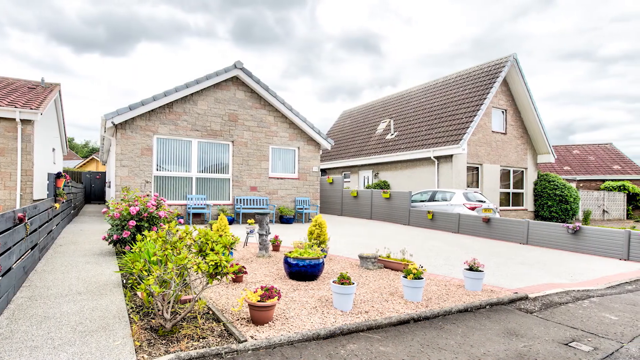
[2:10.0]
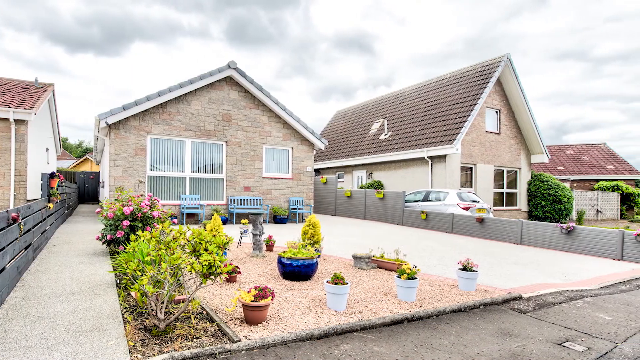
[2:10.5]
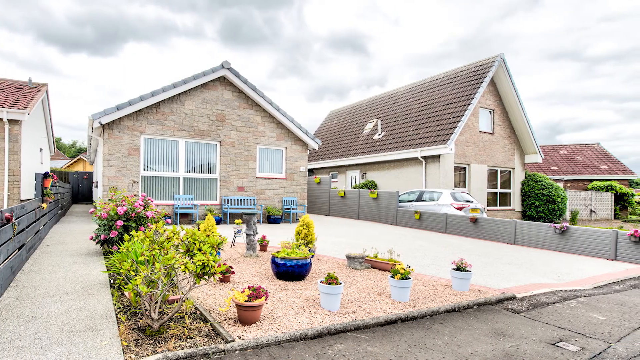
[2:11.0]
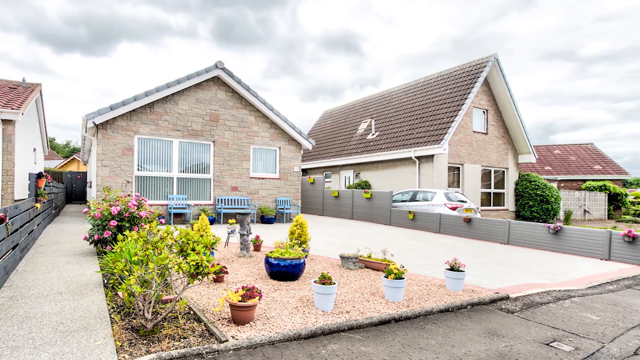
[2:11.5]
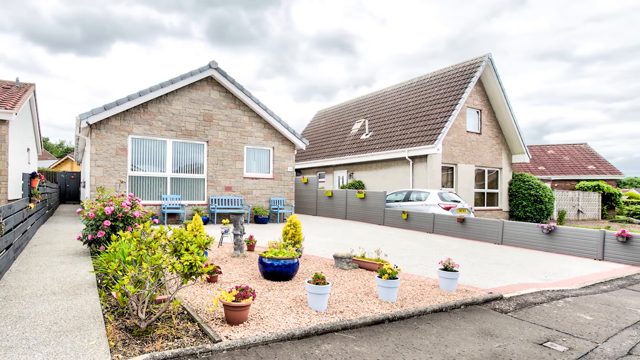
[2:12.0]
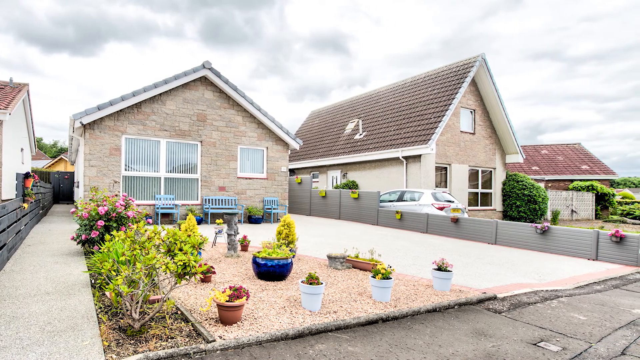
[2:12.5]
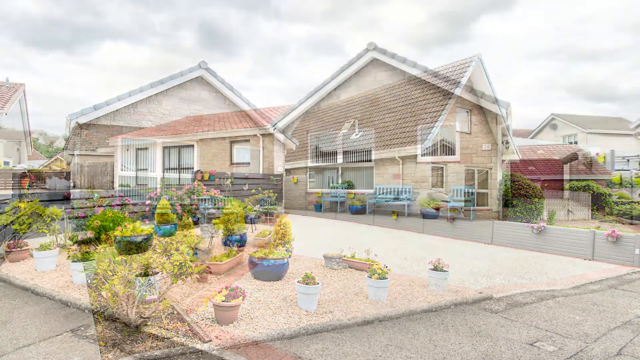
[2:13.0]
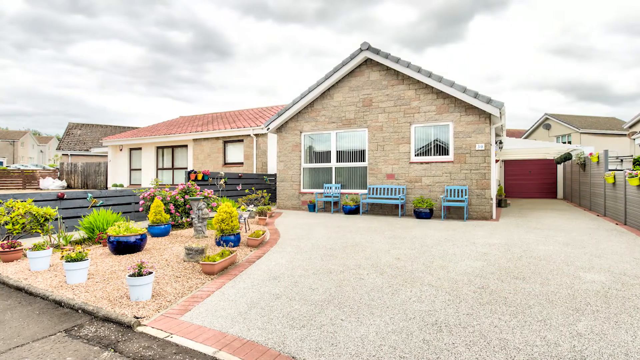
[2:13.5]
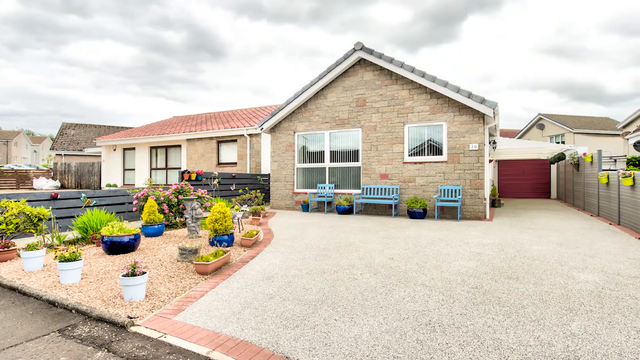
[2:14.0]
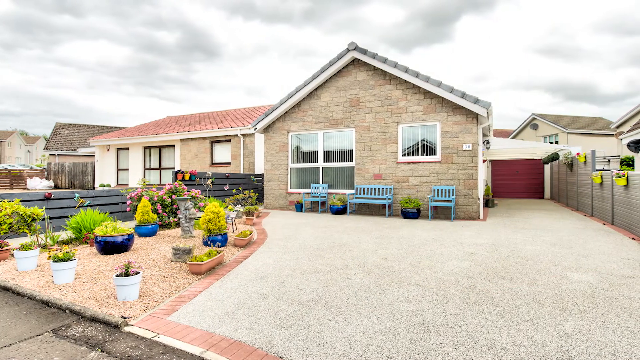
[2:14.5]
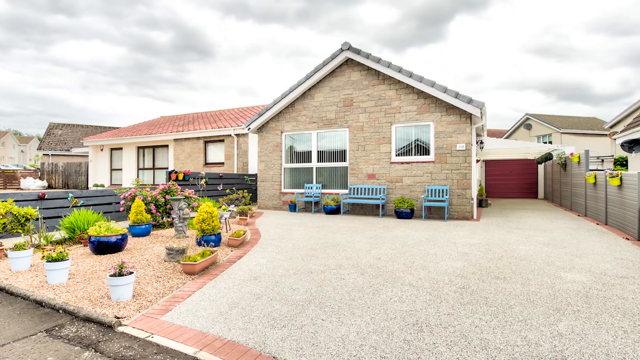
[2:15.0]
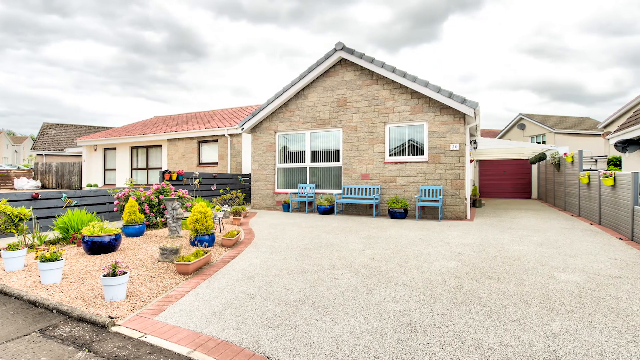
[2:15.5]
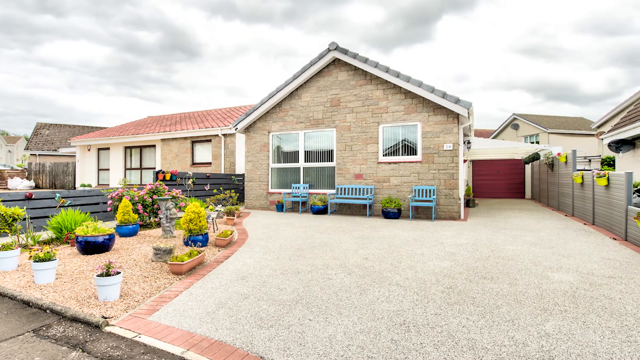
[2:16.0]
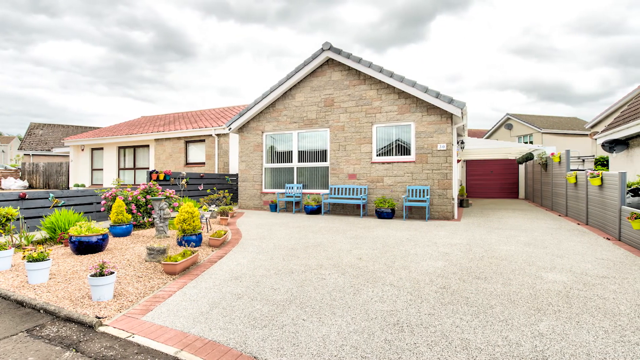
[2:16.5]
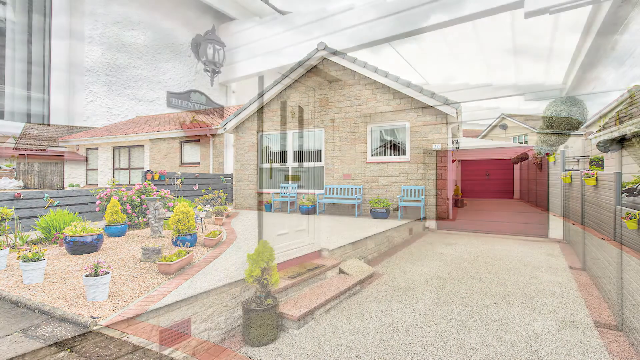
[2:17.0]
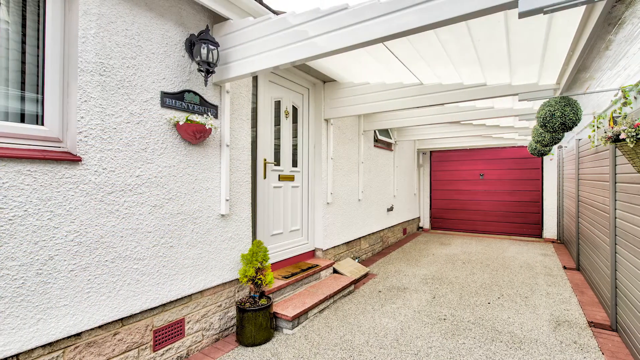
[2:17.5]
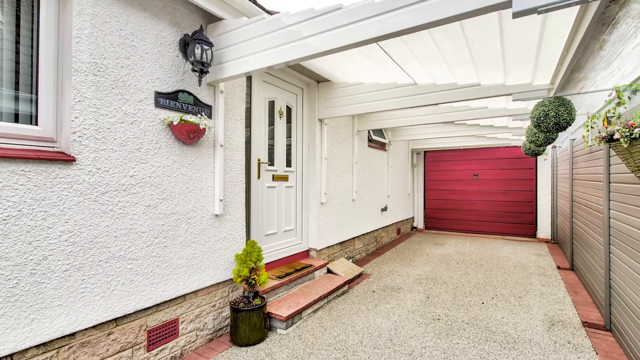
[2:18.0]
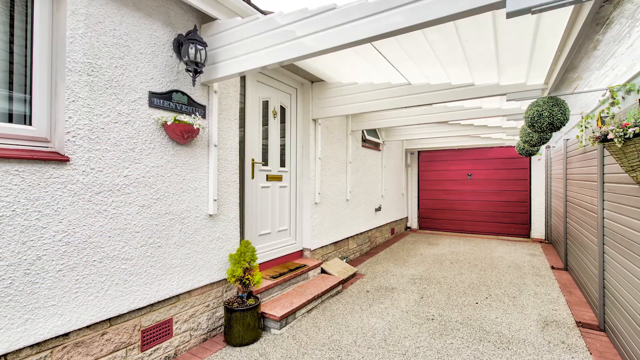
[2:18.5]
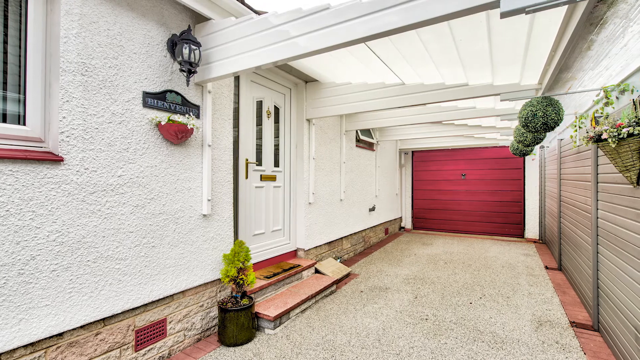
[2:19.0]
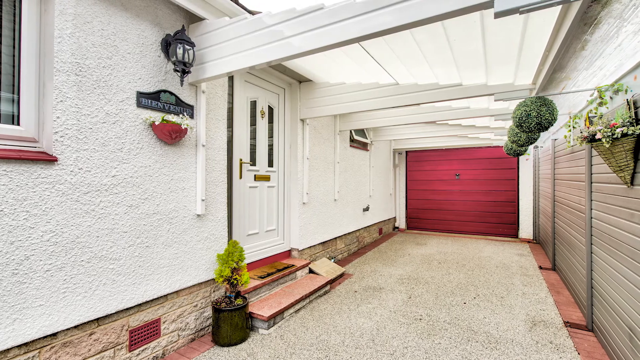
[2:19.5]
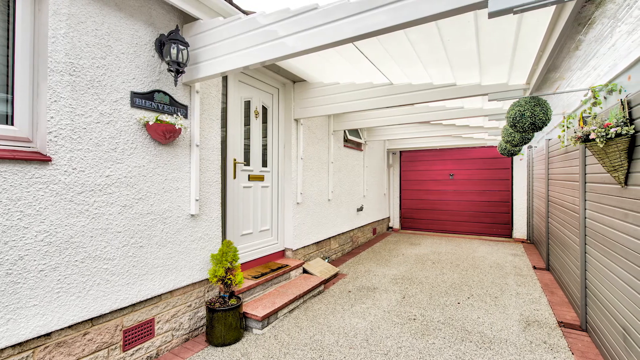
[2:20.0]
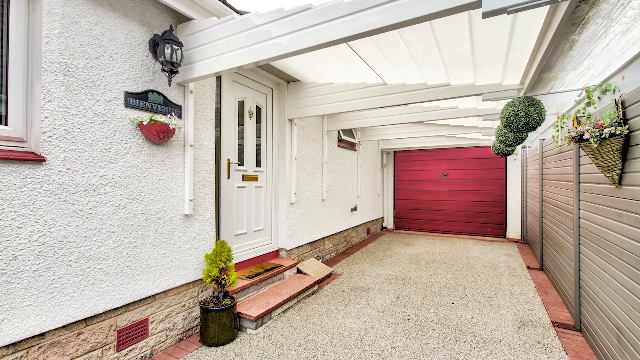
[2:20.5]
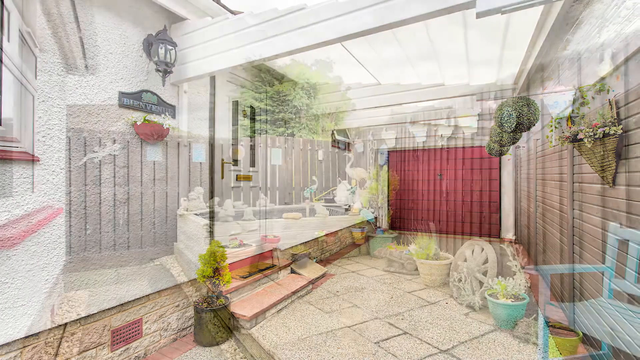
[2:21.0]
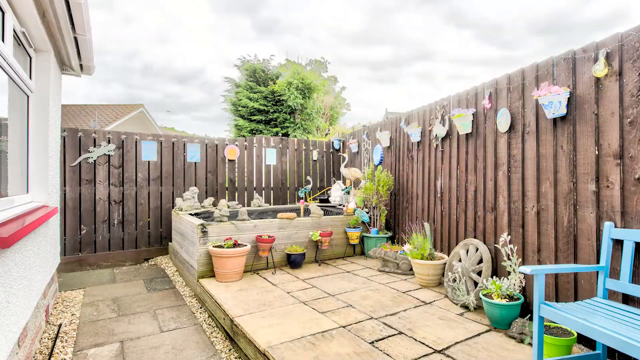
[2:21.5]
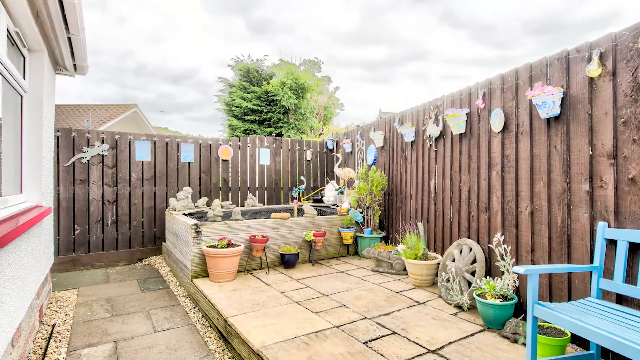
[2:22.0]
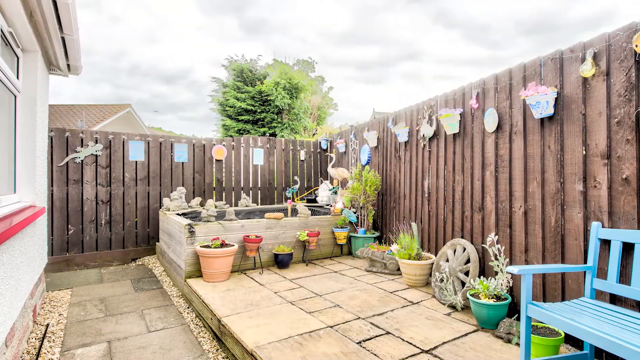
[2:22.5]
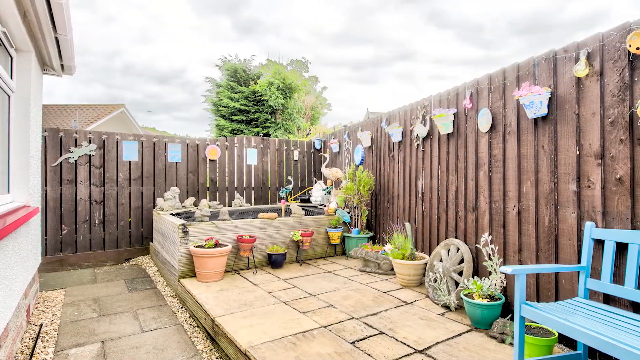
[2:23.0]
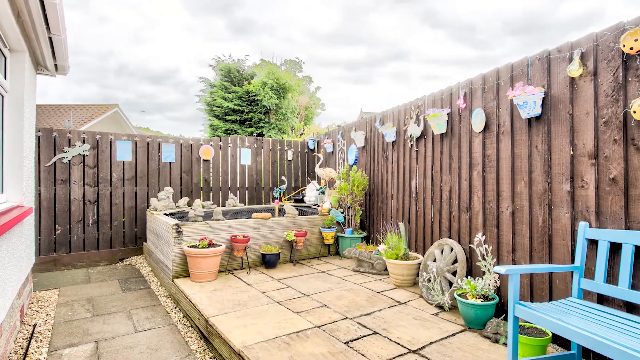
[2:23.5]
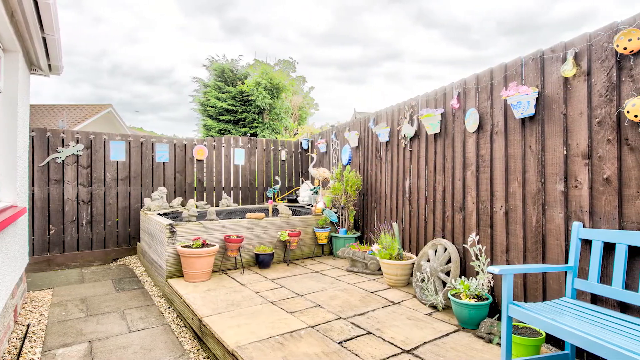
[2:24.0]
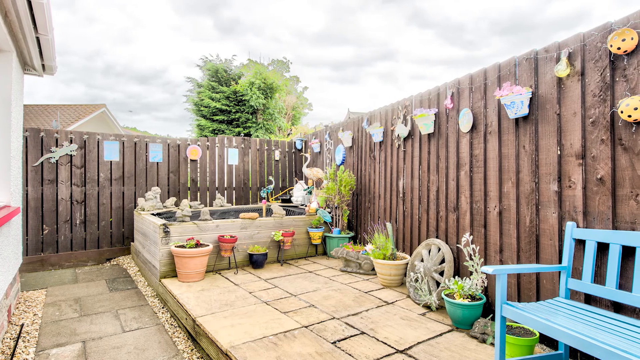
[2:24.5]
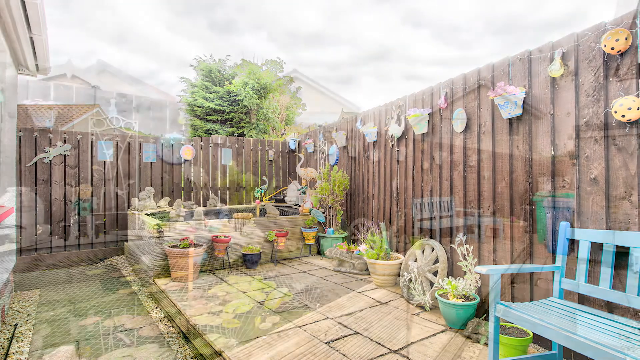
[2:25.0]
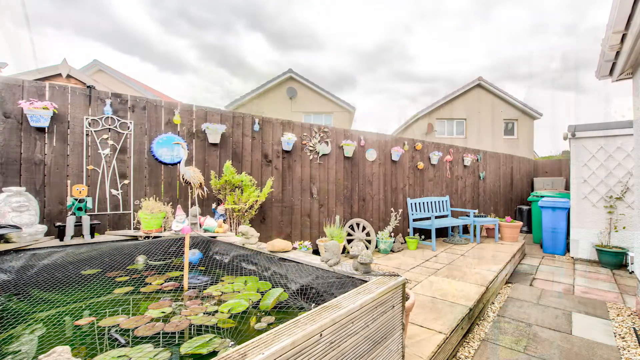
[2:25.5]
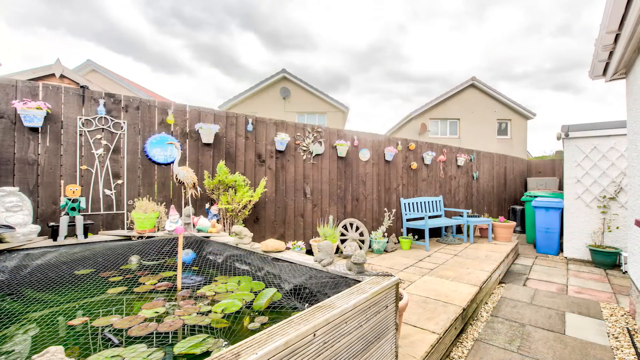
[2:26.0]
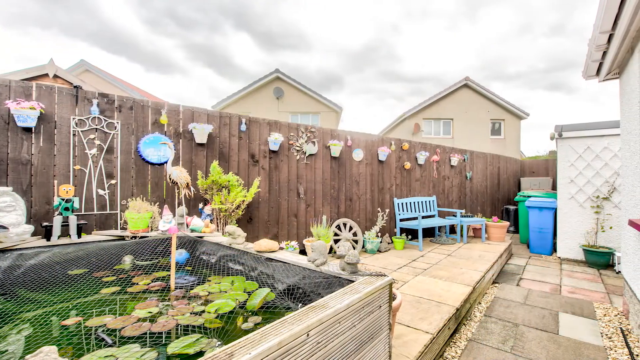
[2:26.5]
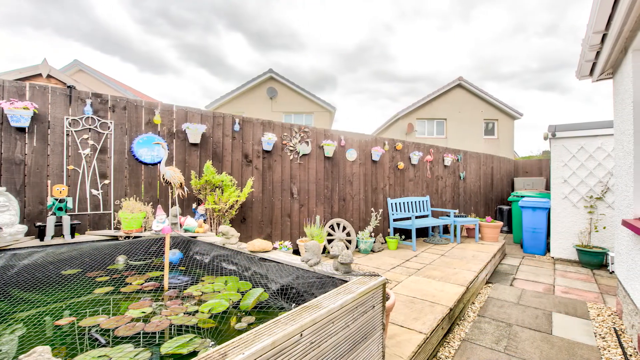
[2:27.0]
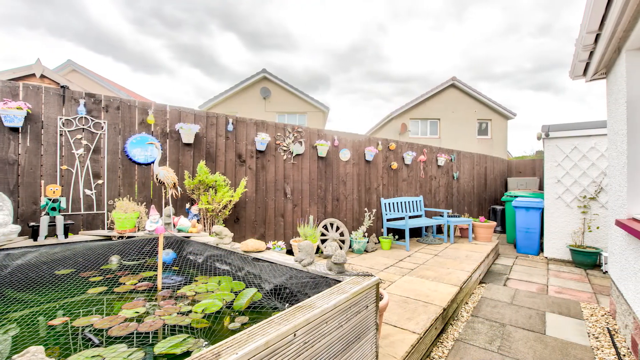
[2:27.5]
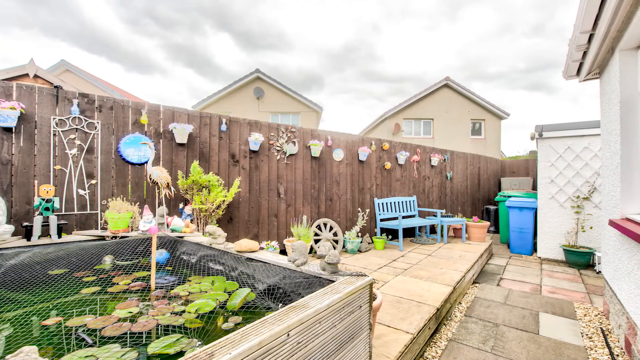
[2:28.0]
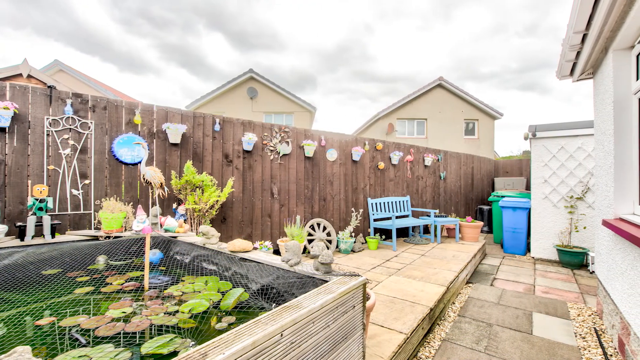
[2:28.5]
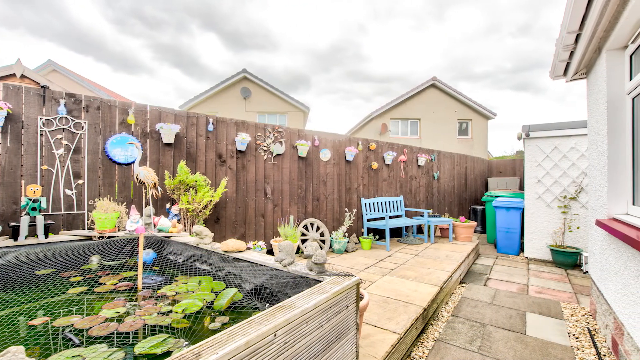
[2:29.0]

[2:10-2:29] The front view of the property is shown one more time. The front of the house has a kind of ashlar, stone cladding, with one big set of windows and one small square window. There is a narrow path on the left-hand side, a gravelled area with pot plants and shrubs, and then the driveway. Another view of the driveway shows the garage doors with a carport roof above them. Moving in closer, there is probably a garage at the back, and the carport is just a cover where the front door is. There is a name panel on the wall, a little red hanging basket, and a couple of imitation pom-pom bushes hanging from the ceiling. A reverse view of the outside shows a back garden with the ponds, some pots, a kind of cart wheel, the blue bench, and a brown fence with pots and knick-knacks hanging from it. The video then repeats the beginning, with the reverse view of the back garden showing the bins, a green pot holding a pot plant at the end, and the end of the garage sticking out with some white trellis on it. In the background are the backs of three houses, one shed and an overcast sky.